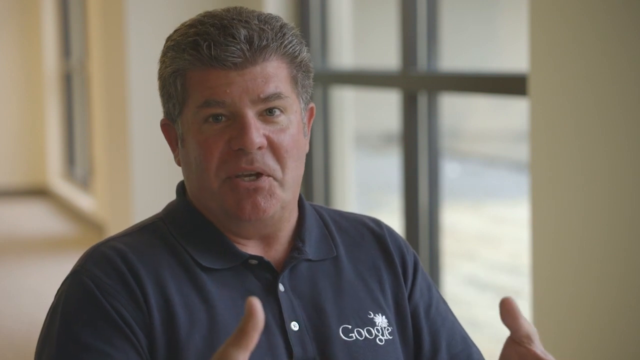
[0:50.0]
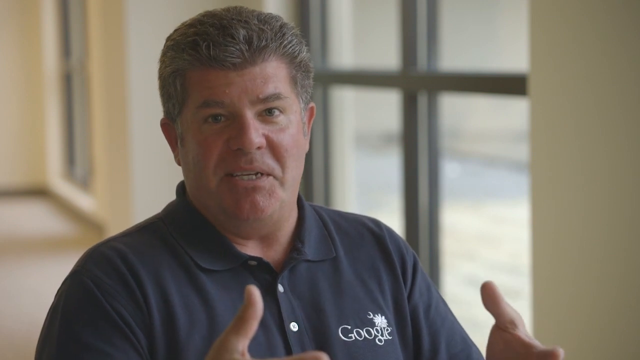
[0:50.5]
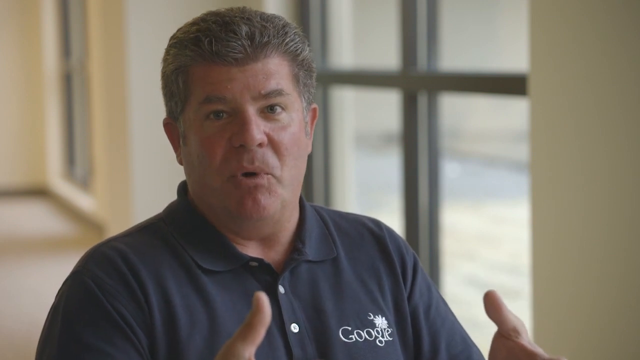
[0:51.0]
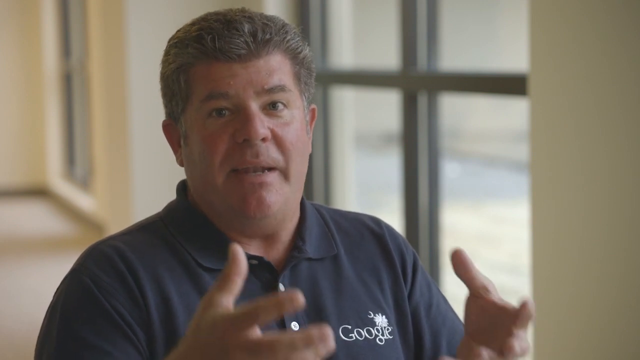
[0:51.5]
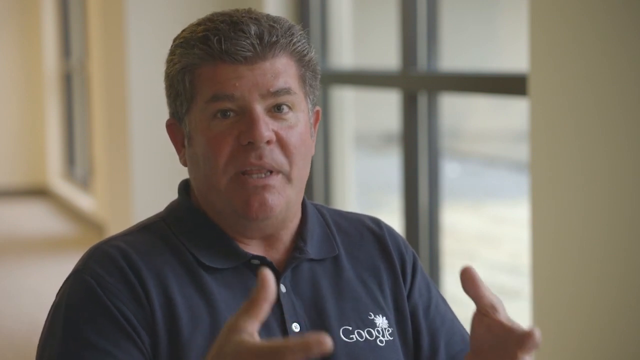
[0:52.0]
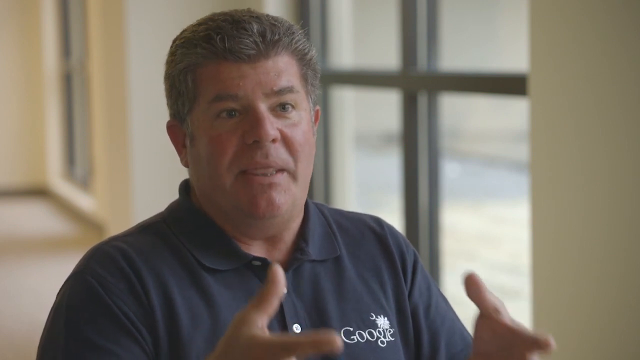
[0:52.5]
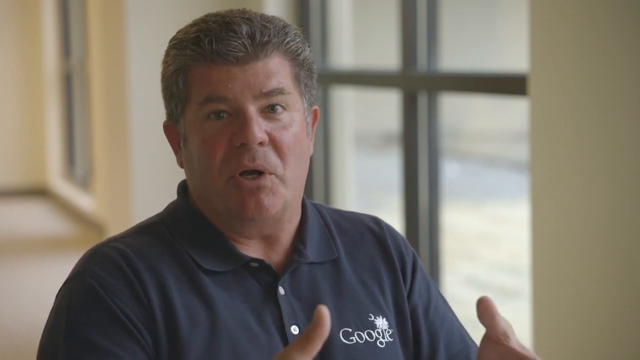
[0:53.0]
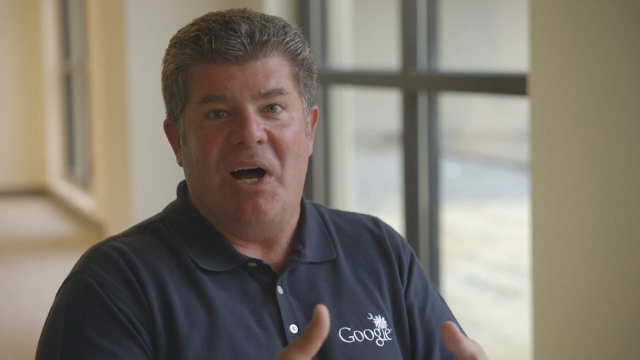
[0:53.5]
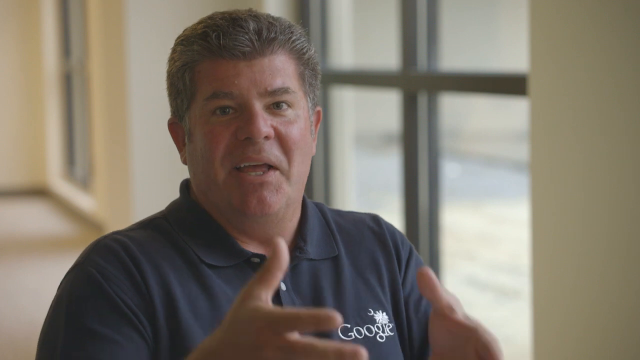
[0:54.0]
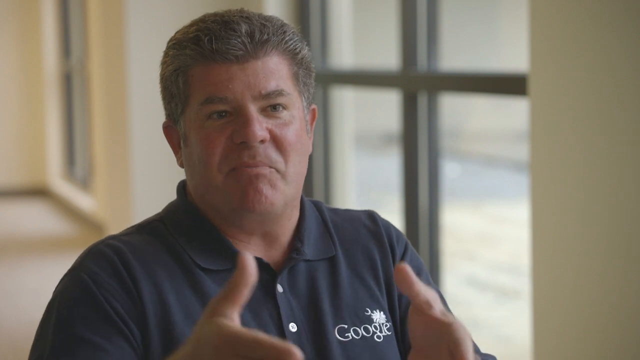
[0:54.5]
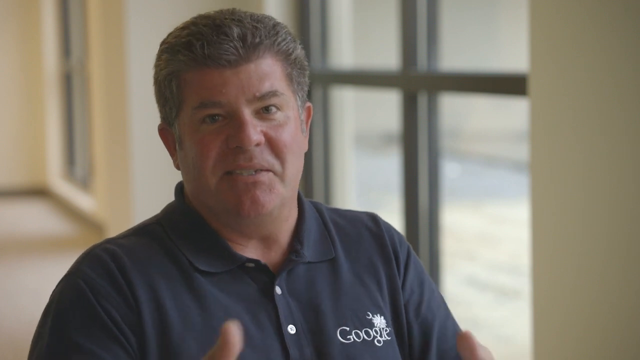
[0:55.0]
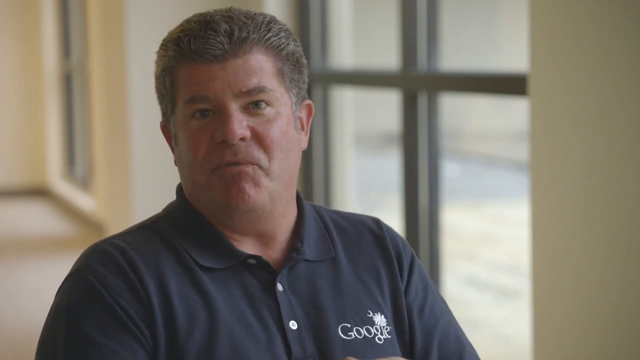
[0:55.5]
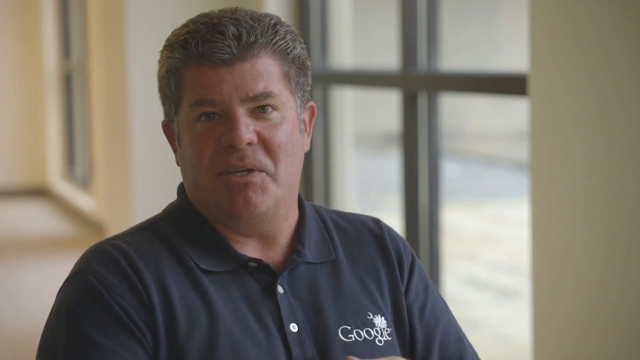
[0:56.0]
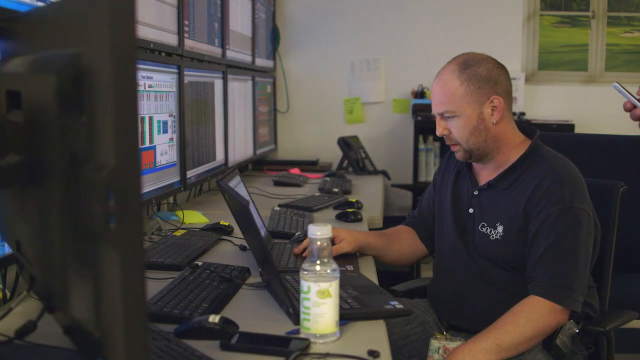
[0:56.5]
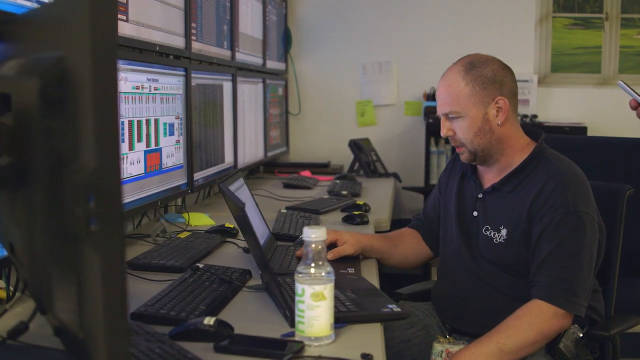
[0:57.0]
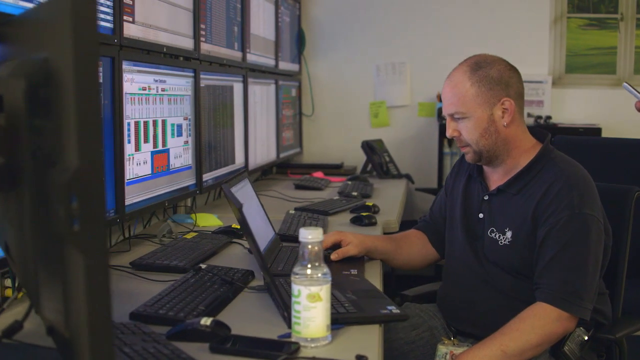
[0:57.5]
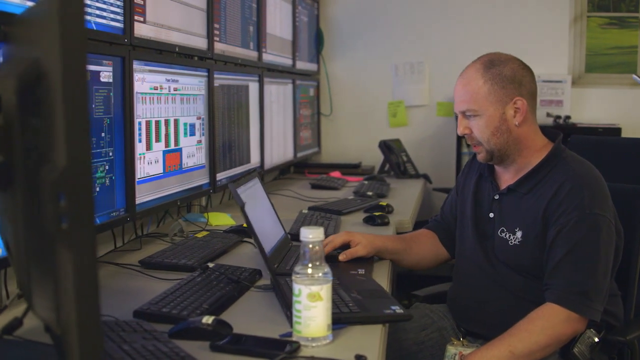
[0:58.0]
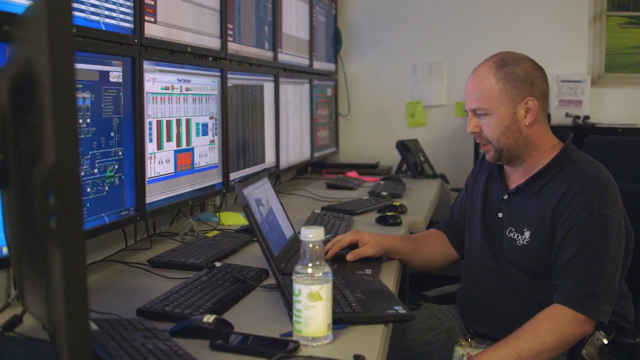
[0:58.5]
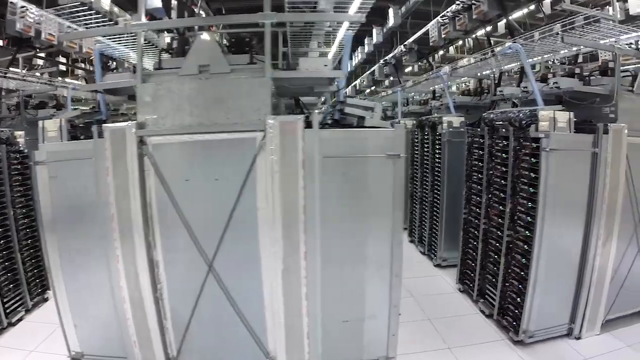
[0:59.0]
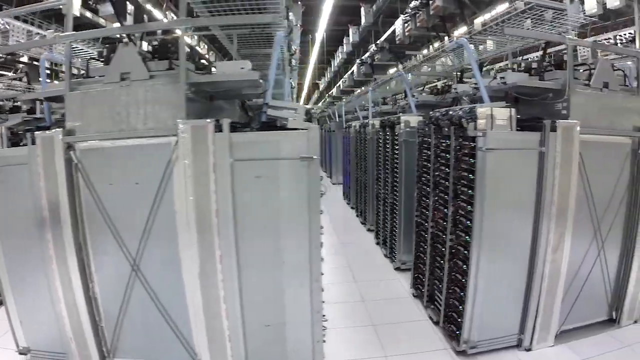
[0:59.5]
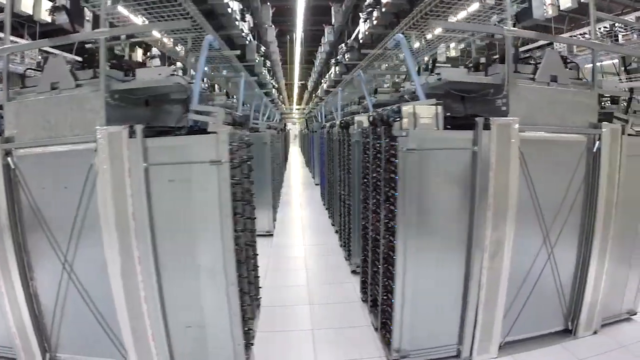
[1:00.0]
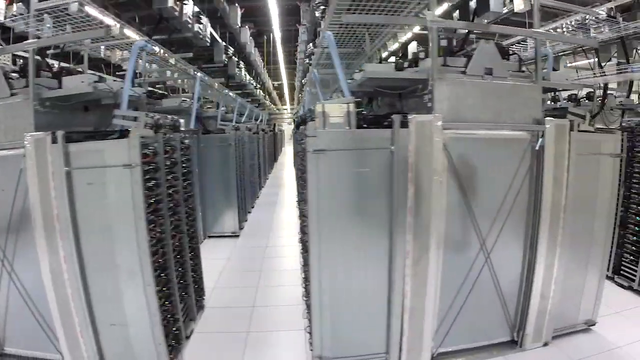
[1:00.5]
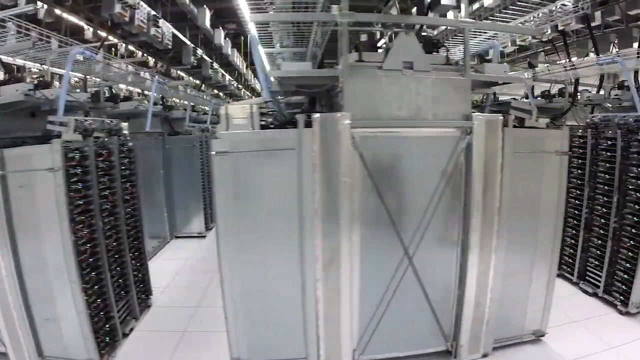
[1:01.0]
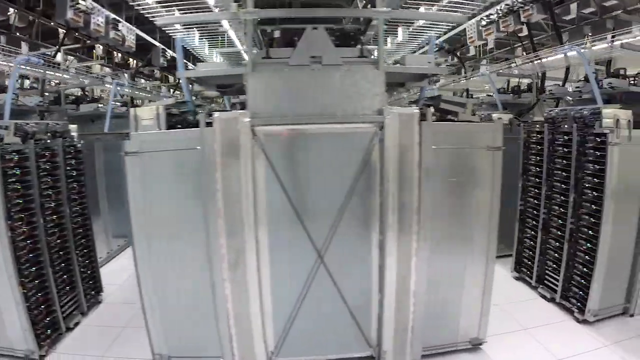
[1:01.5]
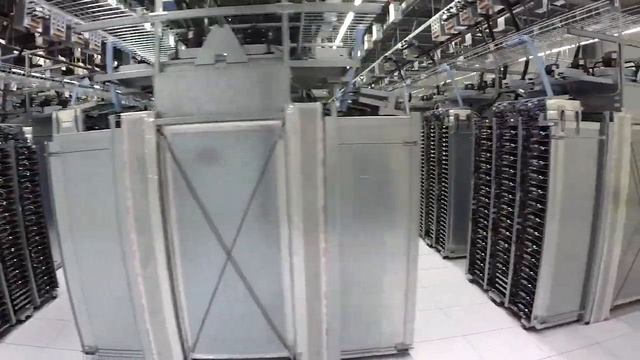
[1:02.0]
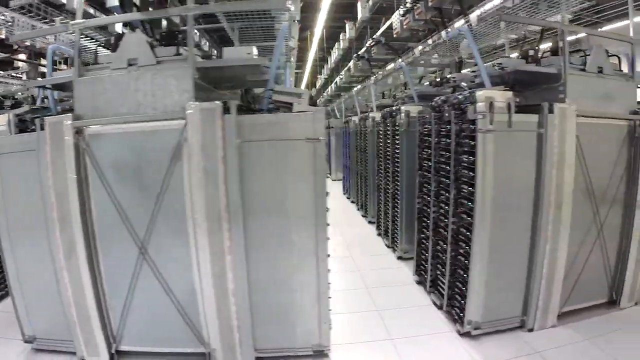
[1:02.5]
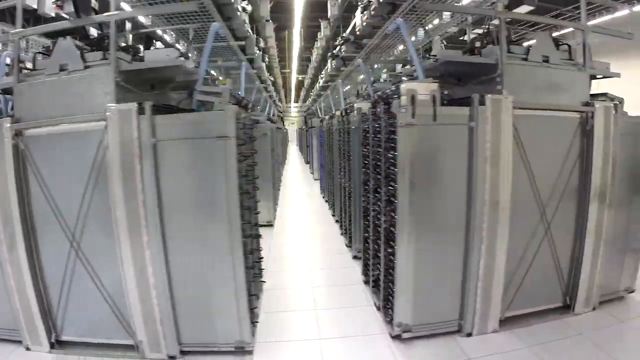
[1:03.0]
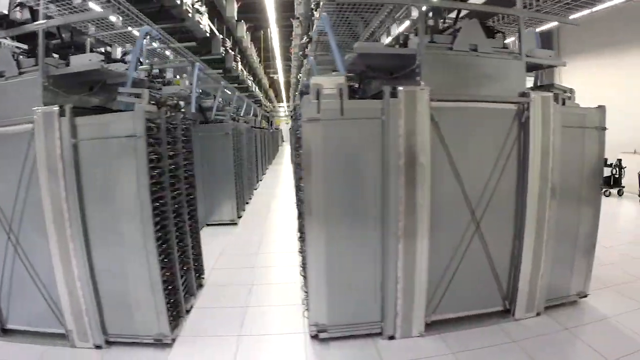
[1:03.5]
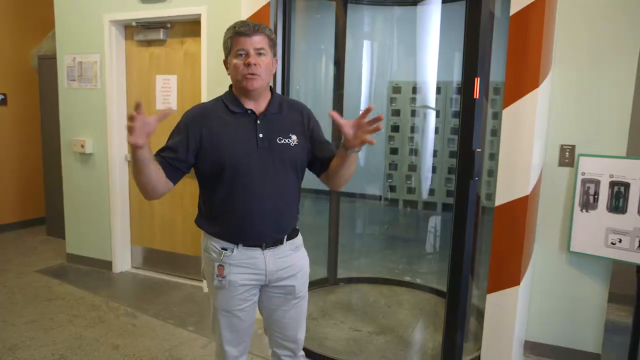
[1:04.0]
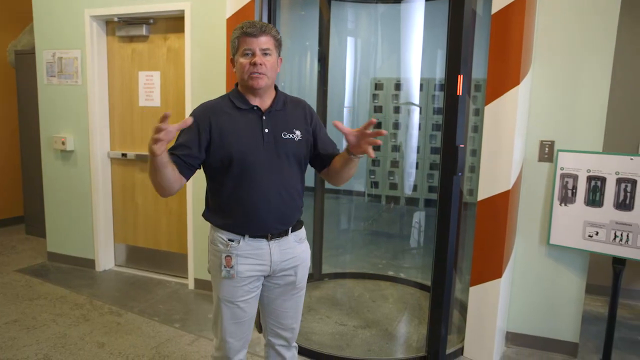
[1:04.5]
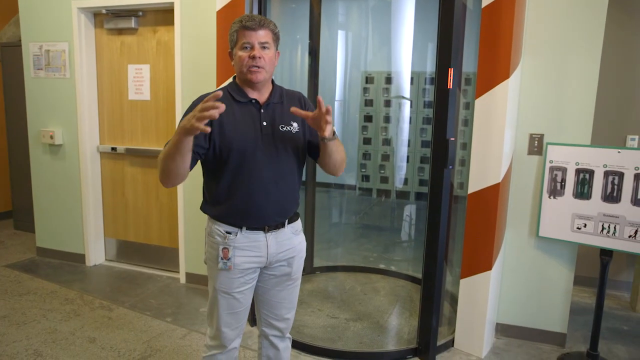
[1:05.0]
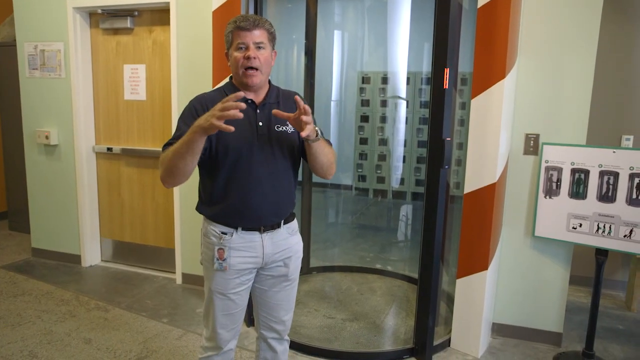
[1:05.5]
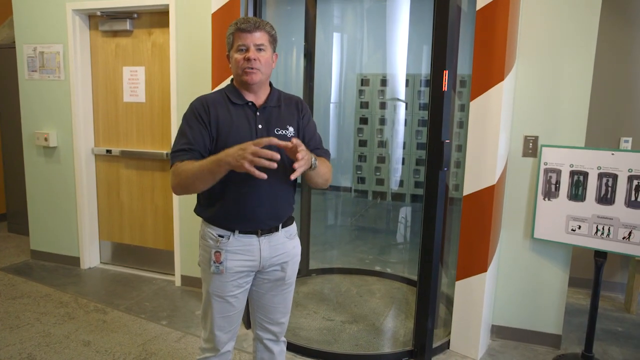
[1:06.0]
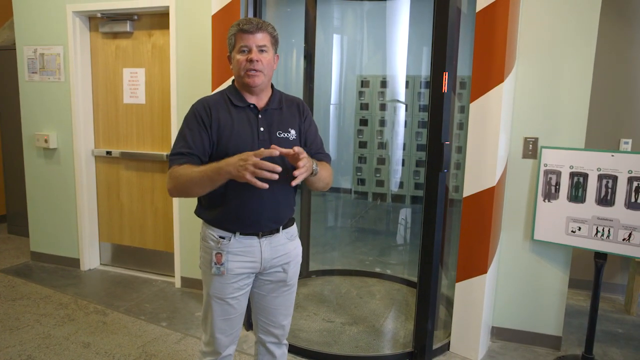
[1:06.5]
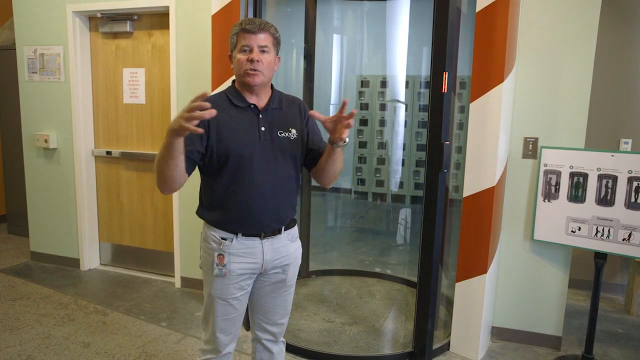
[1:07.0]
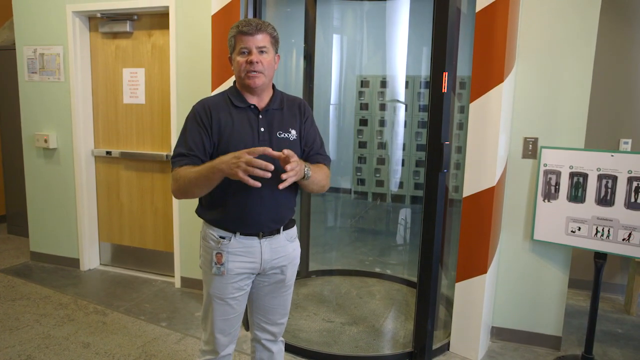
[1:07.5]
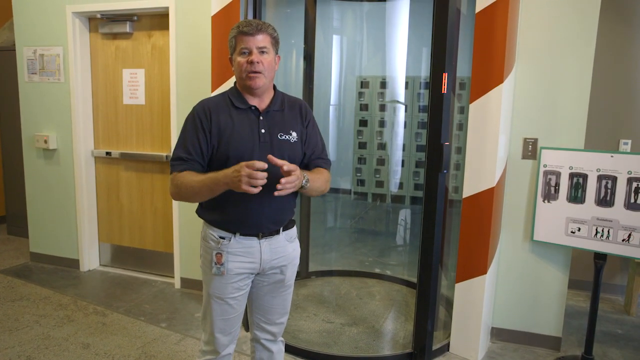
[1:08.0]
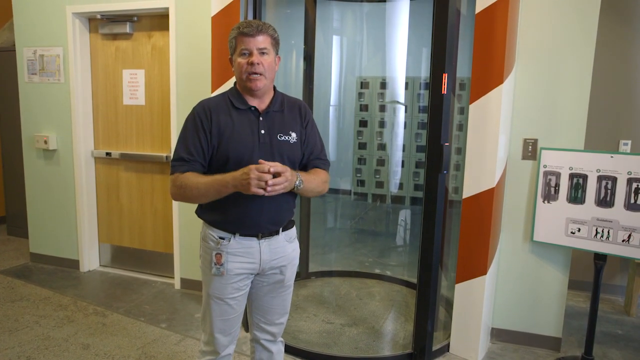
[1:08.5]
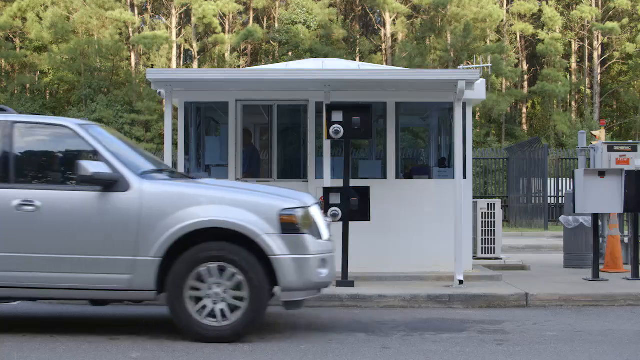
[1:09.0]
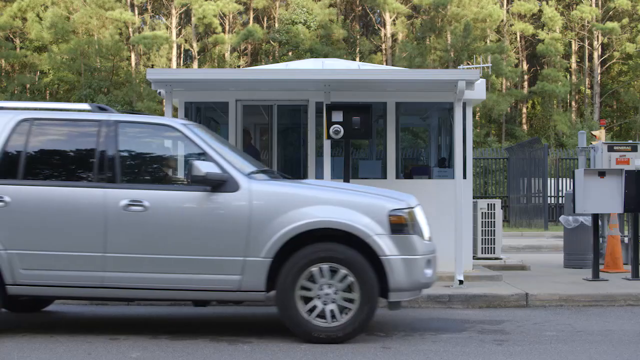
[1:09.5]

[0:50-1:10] The same man talks as he is interviewed, still wearing his Google outfit and shirt. He moves to another location, seemingly to show different areas of the facilities. Another employee works on a laptop. Different areas appear, including a room full of metal machines that probably relate to data processing and storage. A car then pulls up to a high-security facility of some sort, where a gate must be passed and there are cameras.